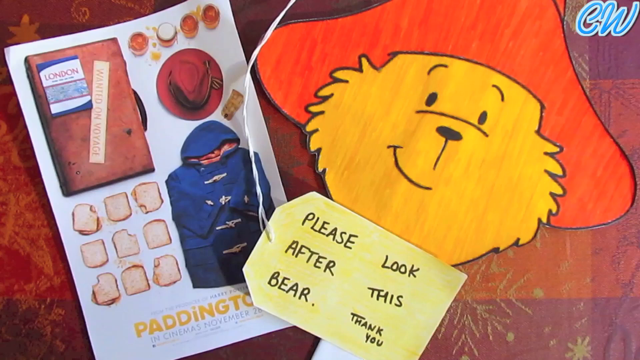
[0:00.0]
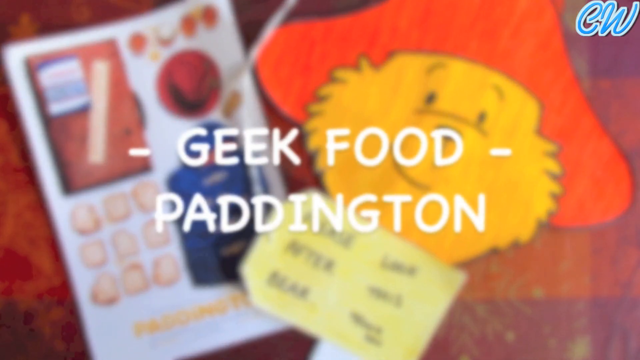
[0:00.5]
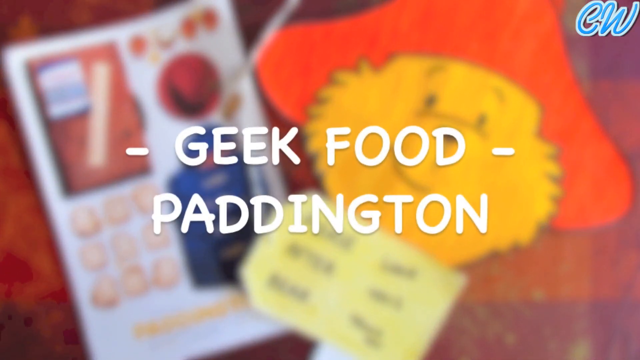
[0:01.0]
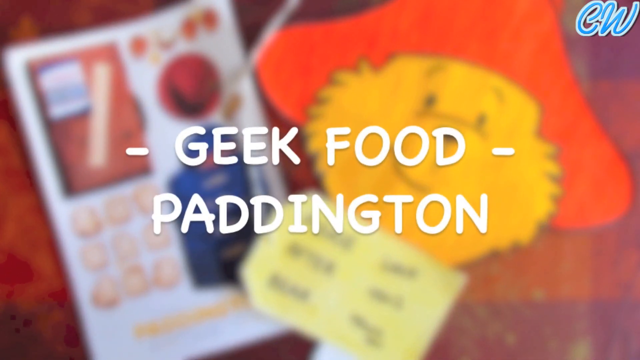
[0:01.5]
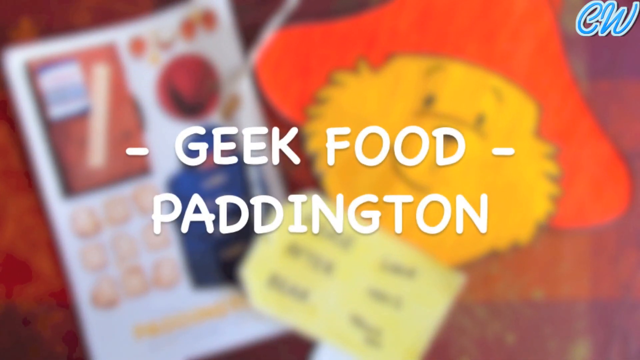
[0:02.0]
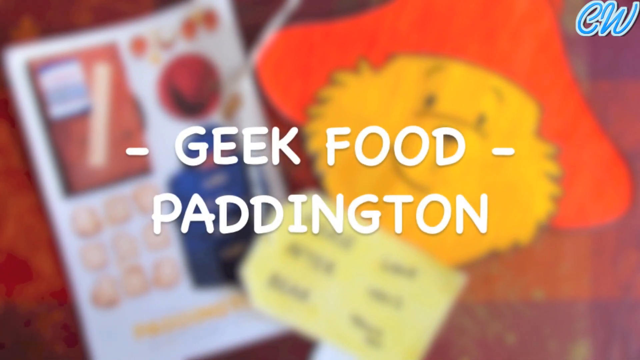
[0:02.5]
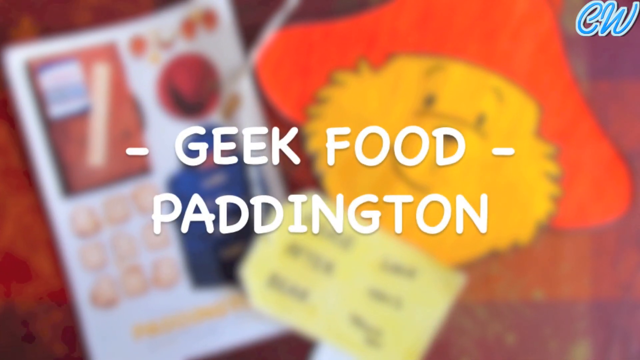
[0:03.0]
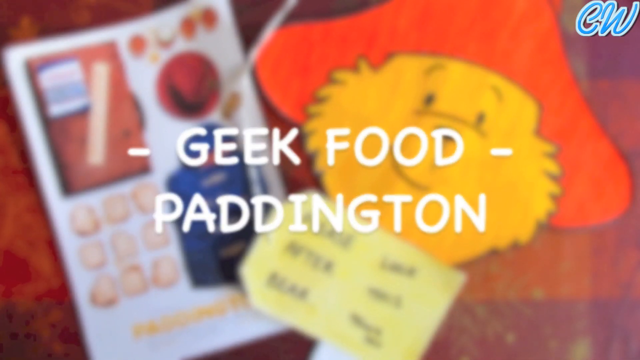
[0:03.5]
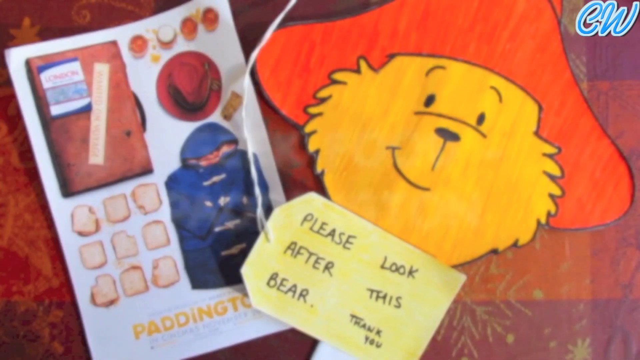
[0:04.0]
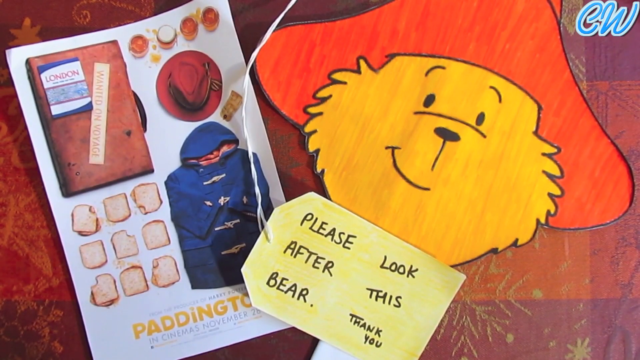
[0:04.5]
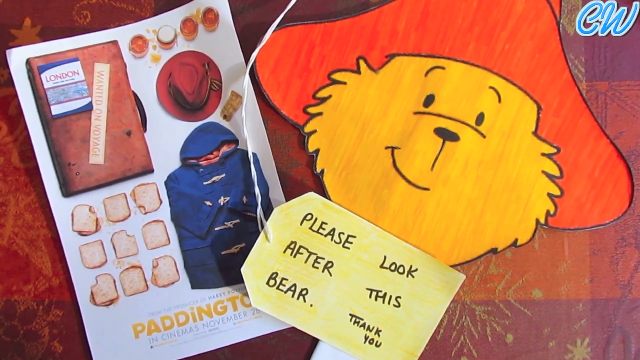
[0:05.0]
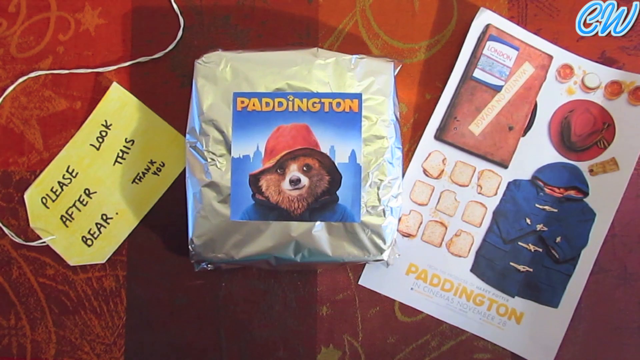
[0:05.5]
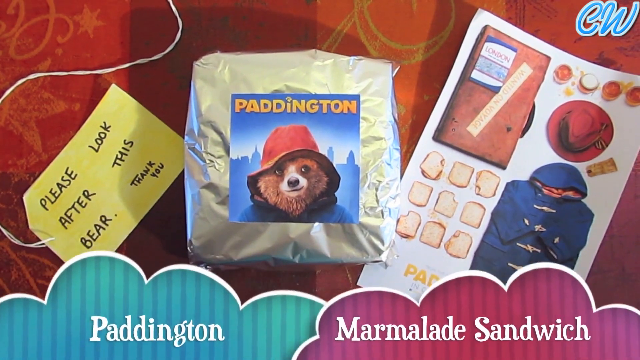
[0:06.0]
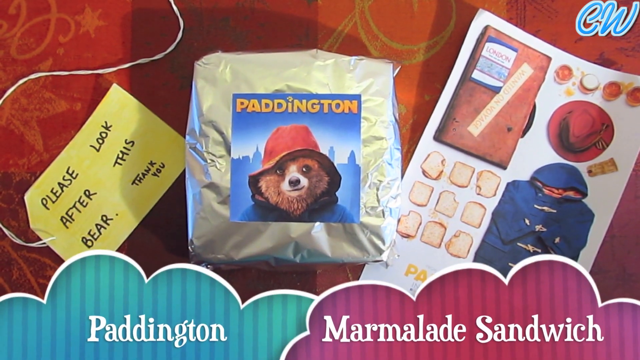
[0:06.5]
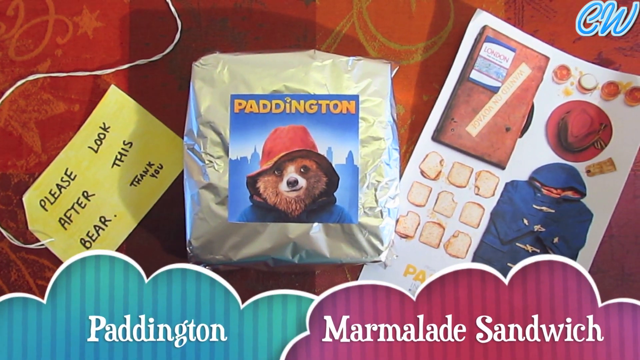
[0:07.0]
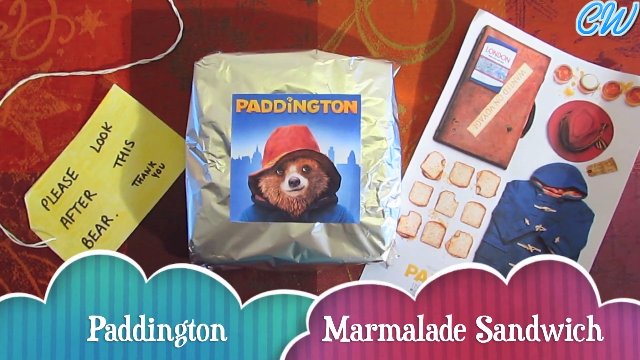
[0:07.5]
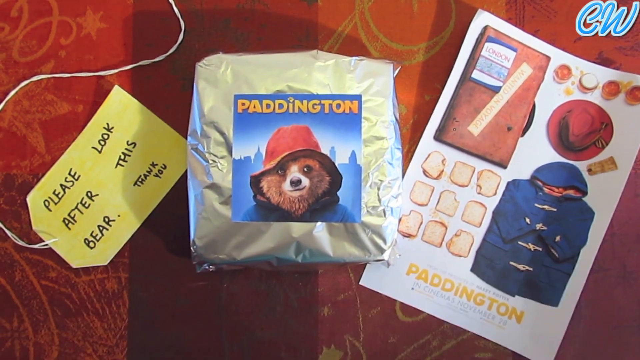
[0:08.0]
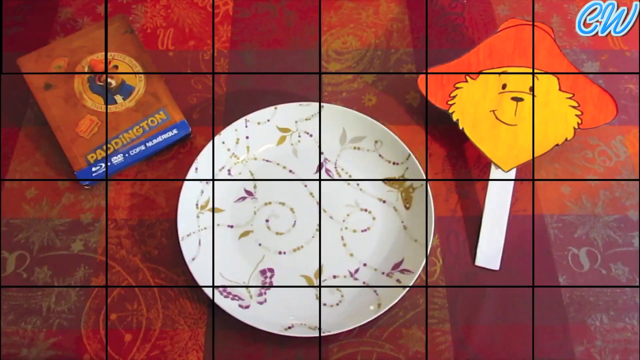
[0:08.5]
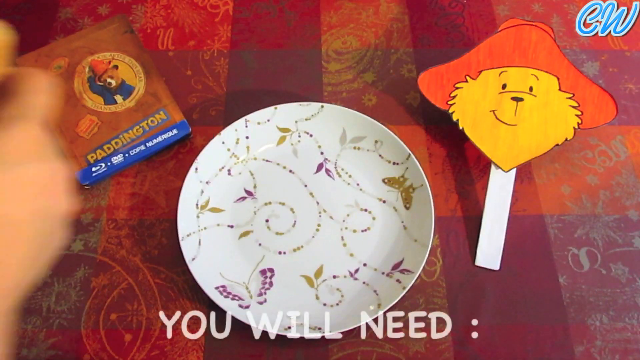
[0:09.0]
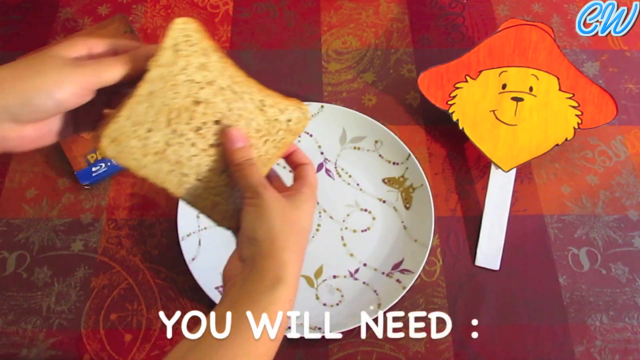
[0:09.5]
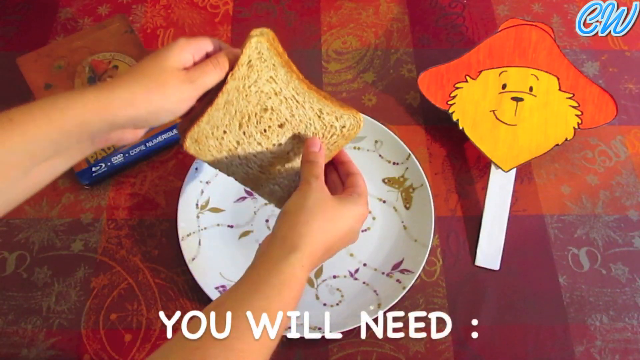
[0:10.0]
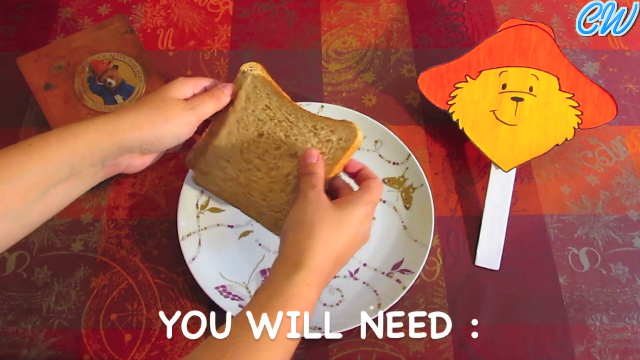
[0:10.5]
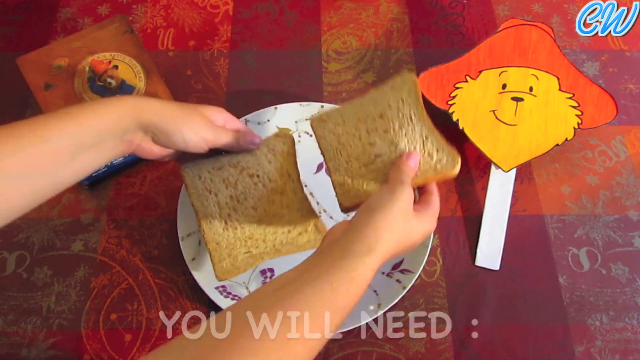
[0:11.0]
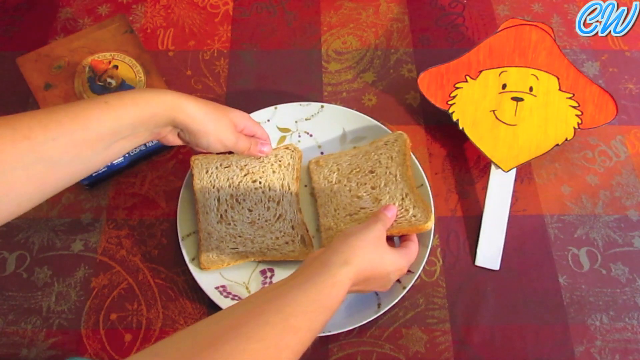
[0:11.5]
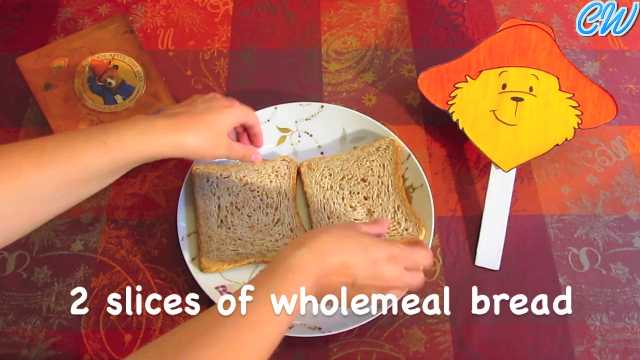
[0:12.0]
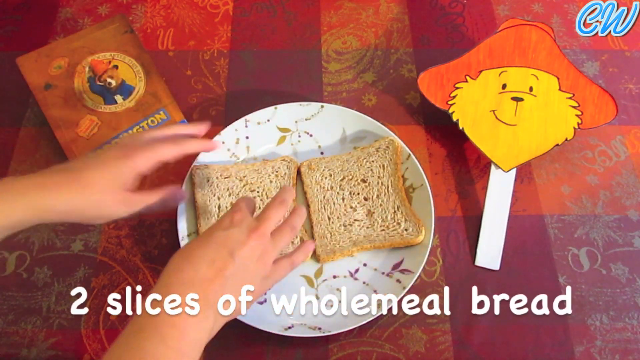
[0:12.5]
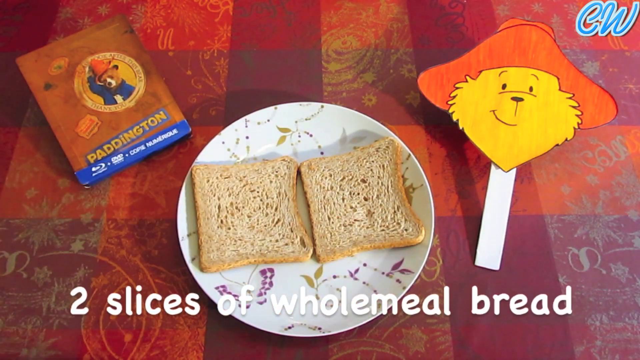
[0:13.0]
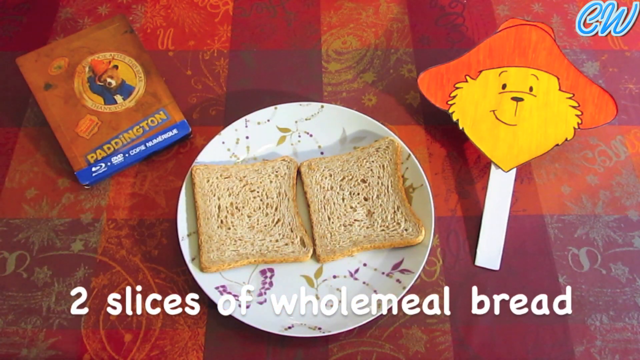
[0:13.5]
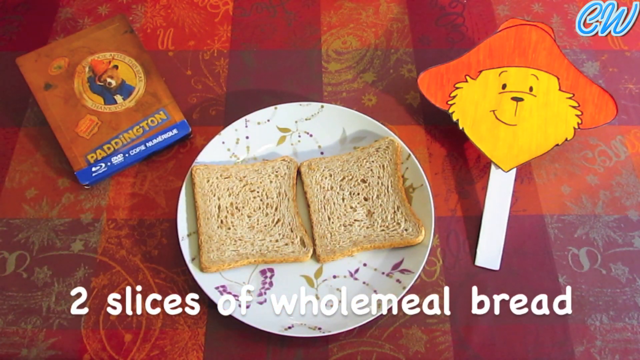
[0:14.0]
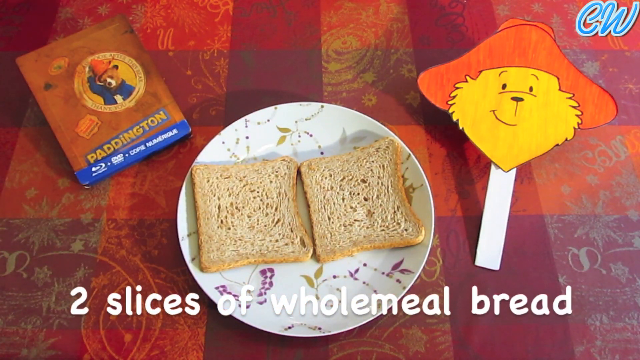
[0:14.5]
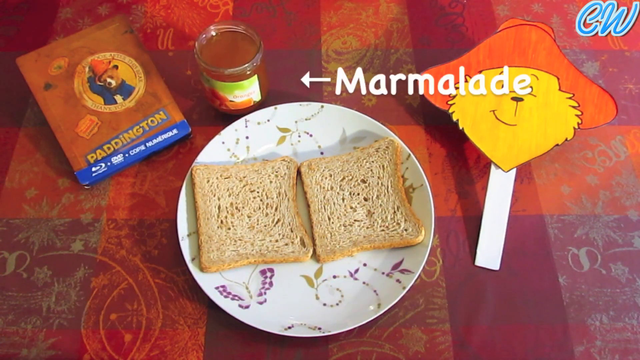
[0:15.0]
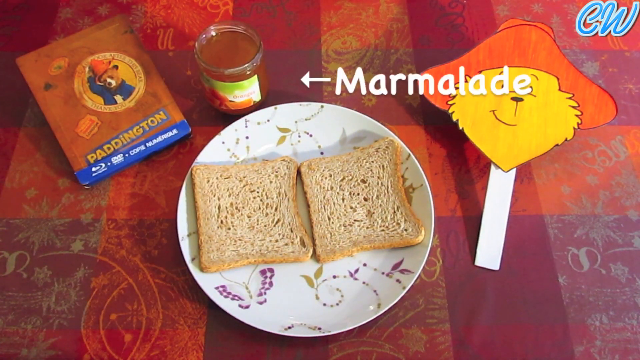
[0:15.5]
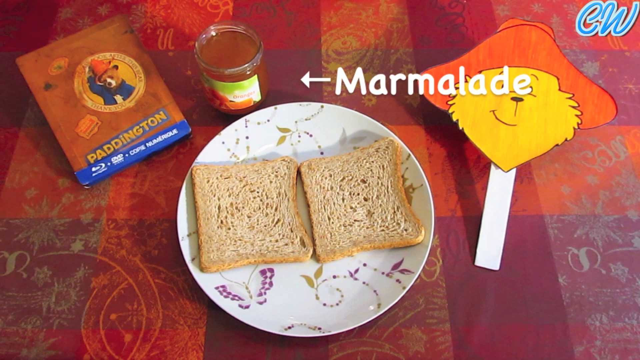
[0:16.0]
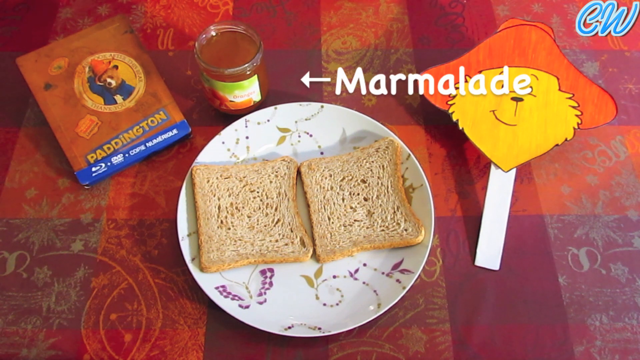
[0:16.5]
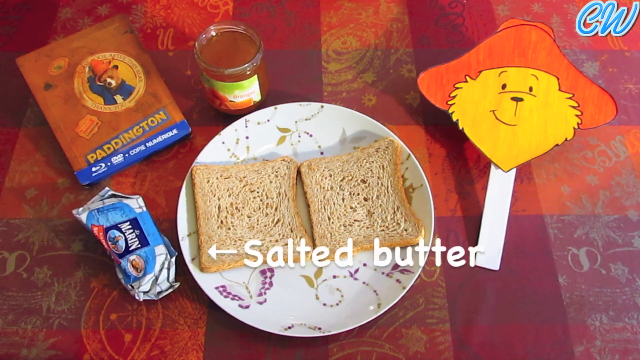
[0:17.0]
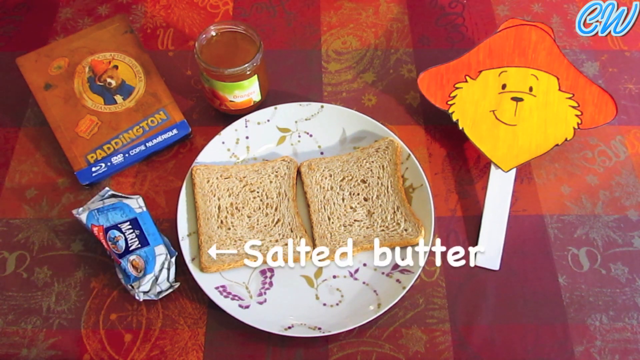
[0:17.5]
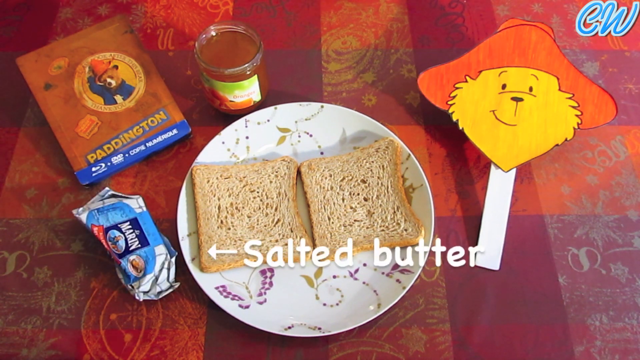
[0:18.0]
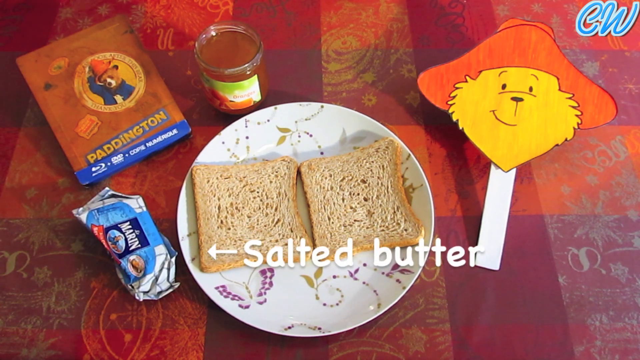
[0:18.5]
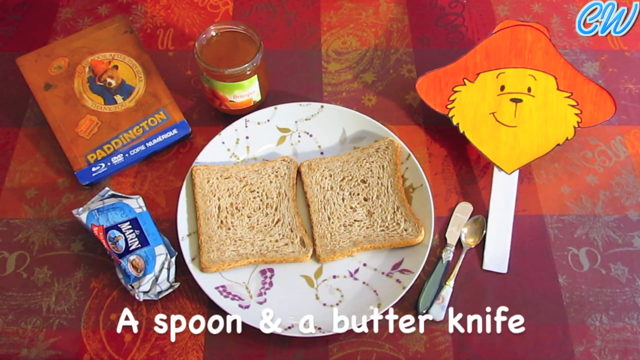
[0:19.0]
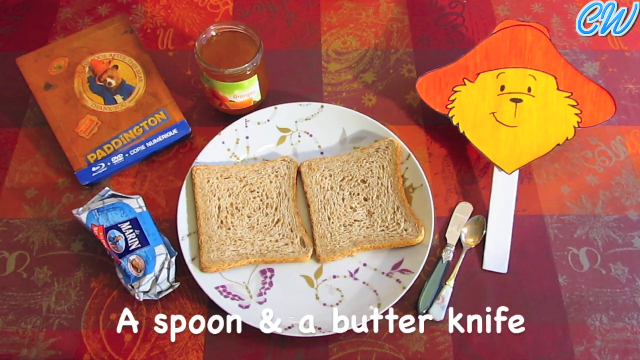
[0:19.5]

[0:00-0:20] The video opens on a drawing next to a post-it note and a magazine cover before text pops onto the screen reading "Geek Food Paddington." The camera goes out of focus, refocuses, and then the scene switches to a bear in a raincoat with a hat on, a city skyline behind its head, and the word "Paddington" above it. Below is a label that says "Paddington Marmalade Sandwich," suggesting this is the type of sandwich that will be made. To the left of the bear is a post-it note that says "please look after this bear, thank you." After a scene transition, two human hands put two slices of bread on the plate and then place marmalade, salted butter, a spoon and a butter knife on the table before the sandwich is constructed.